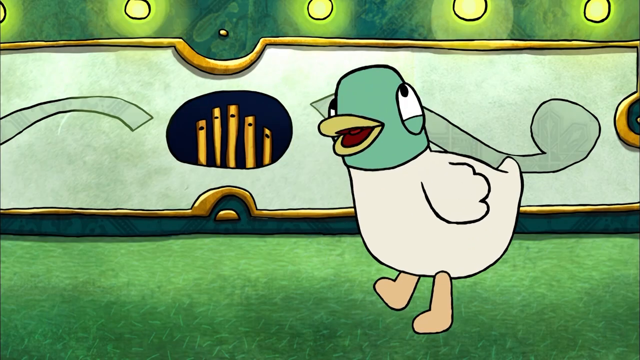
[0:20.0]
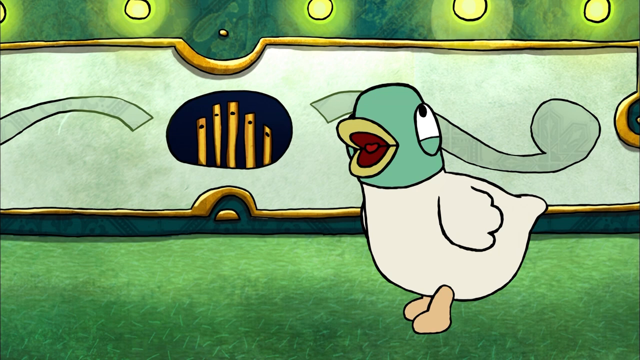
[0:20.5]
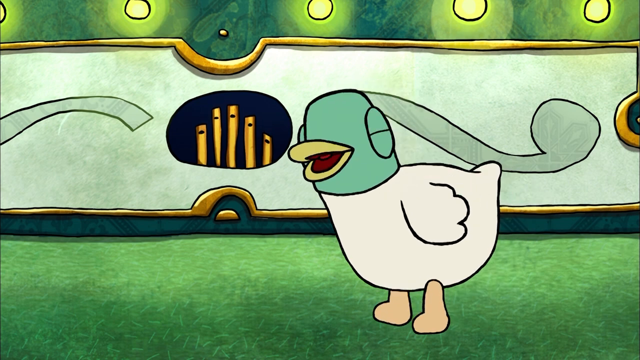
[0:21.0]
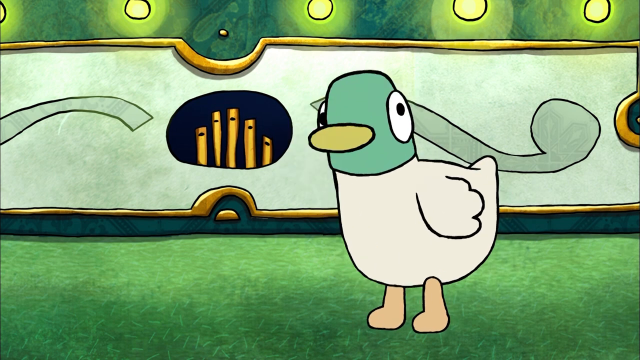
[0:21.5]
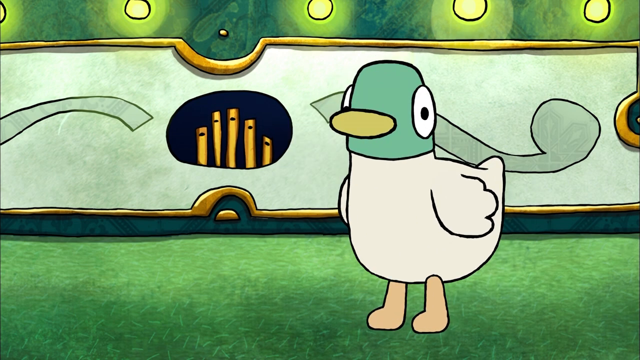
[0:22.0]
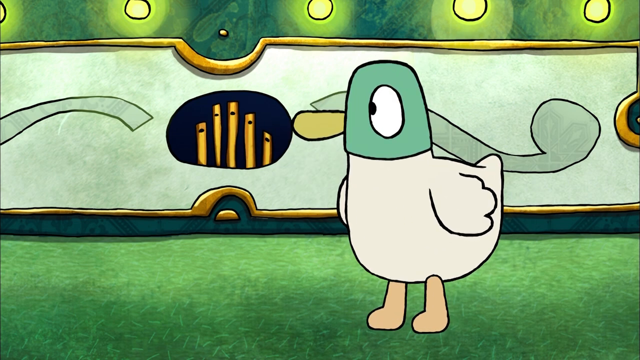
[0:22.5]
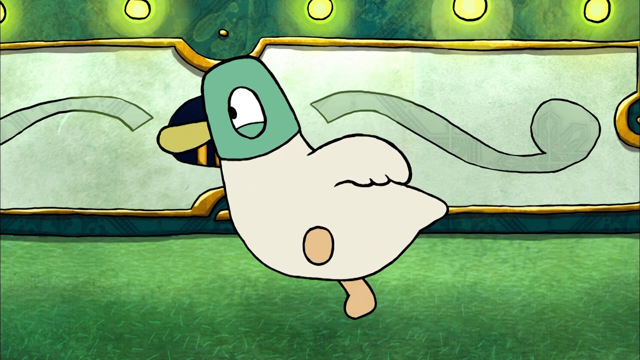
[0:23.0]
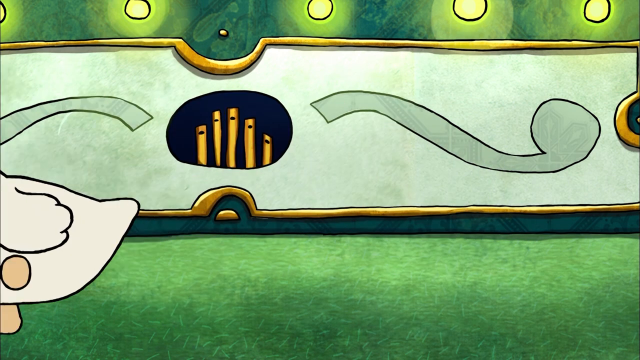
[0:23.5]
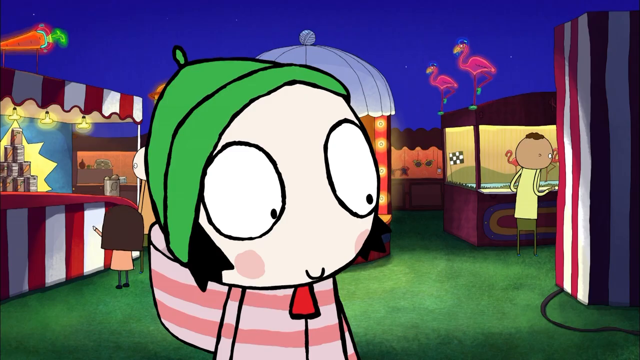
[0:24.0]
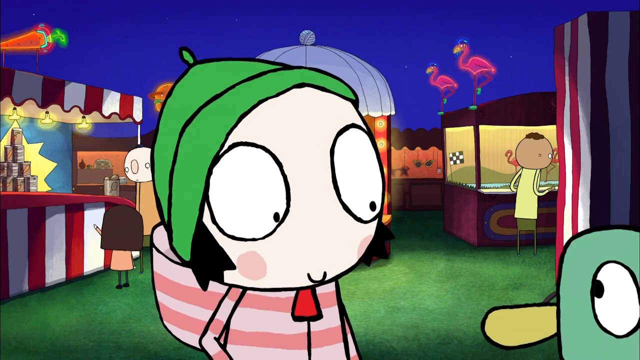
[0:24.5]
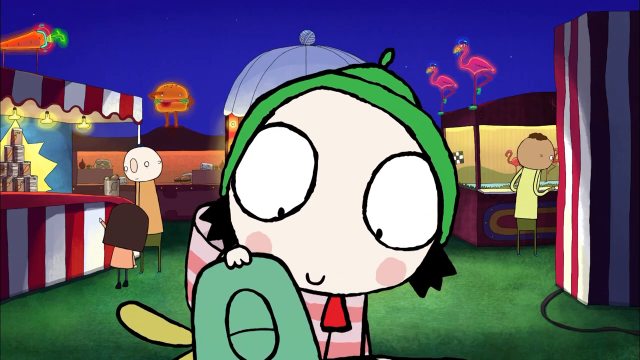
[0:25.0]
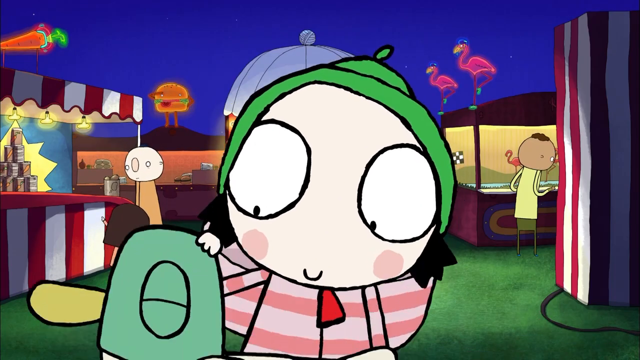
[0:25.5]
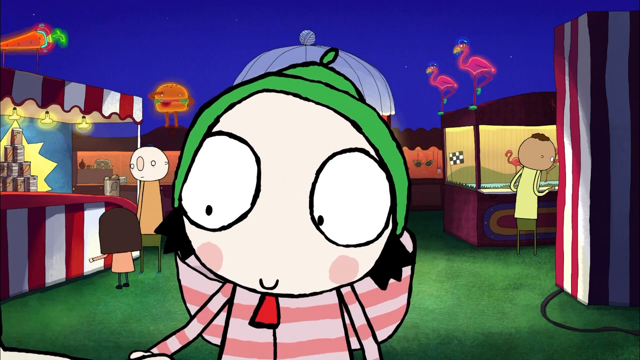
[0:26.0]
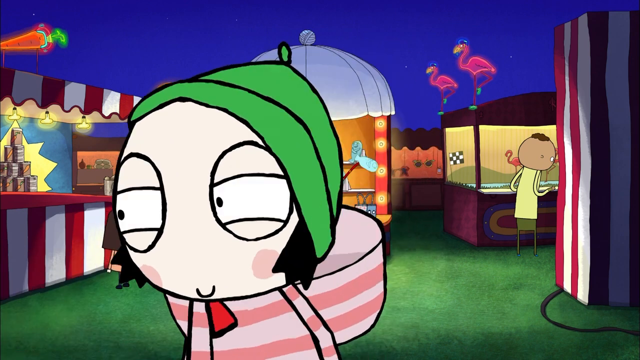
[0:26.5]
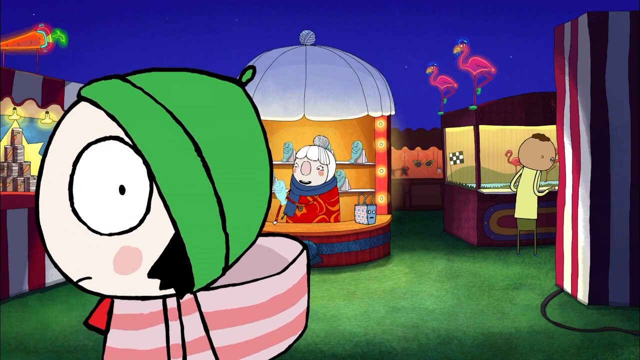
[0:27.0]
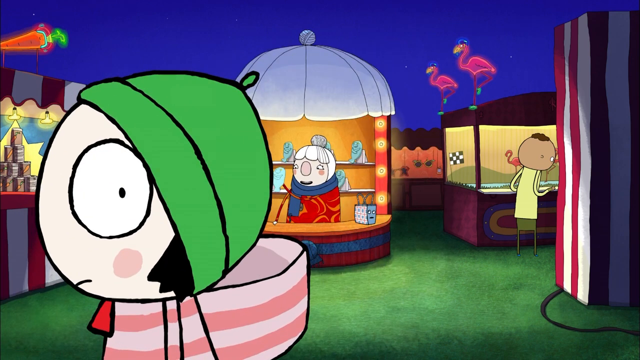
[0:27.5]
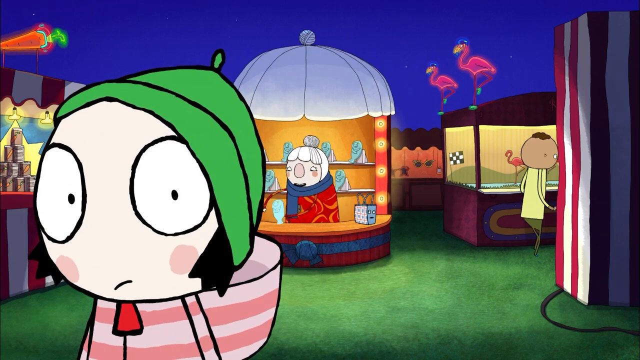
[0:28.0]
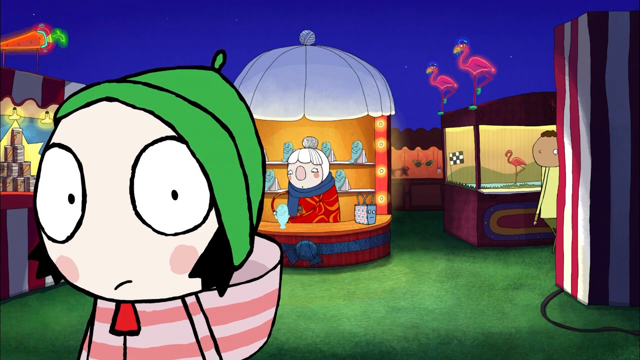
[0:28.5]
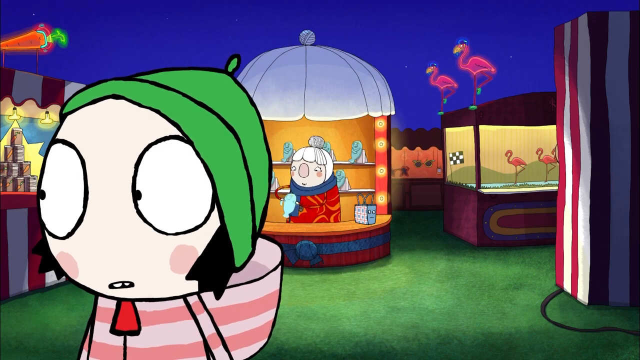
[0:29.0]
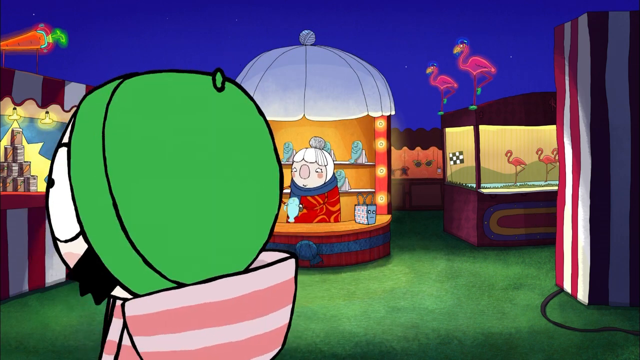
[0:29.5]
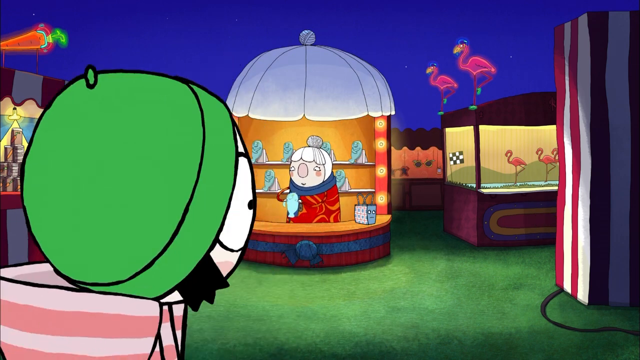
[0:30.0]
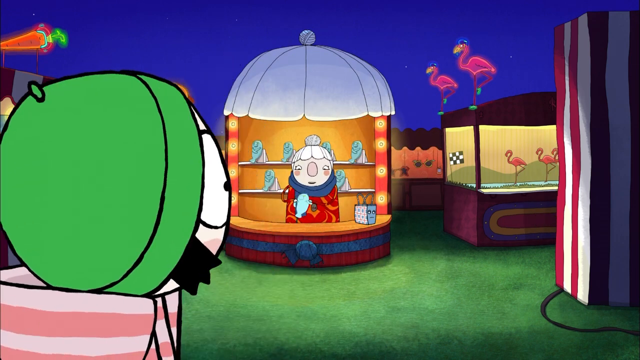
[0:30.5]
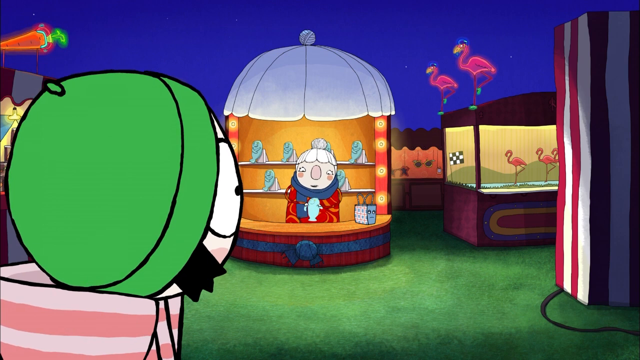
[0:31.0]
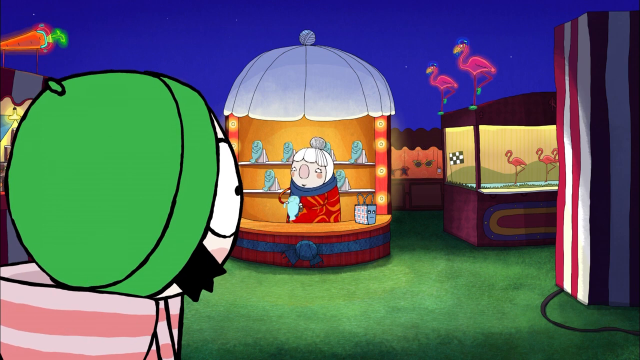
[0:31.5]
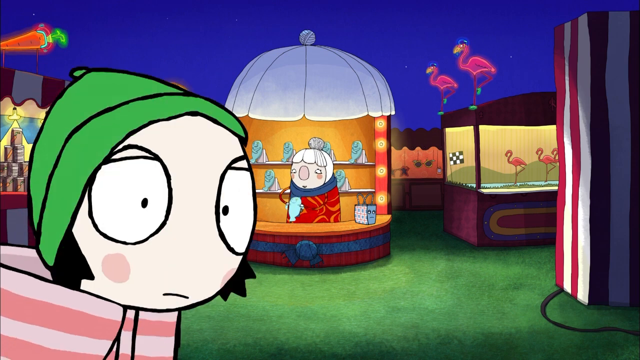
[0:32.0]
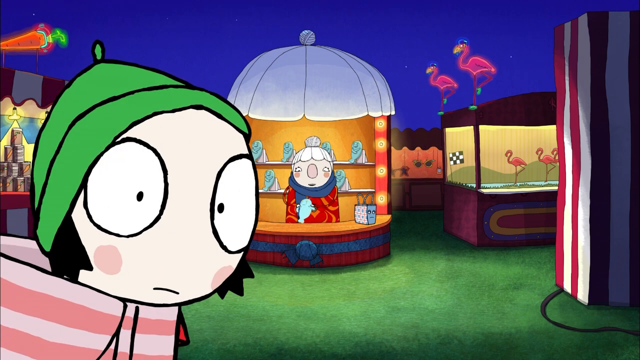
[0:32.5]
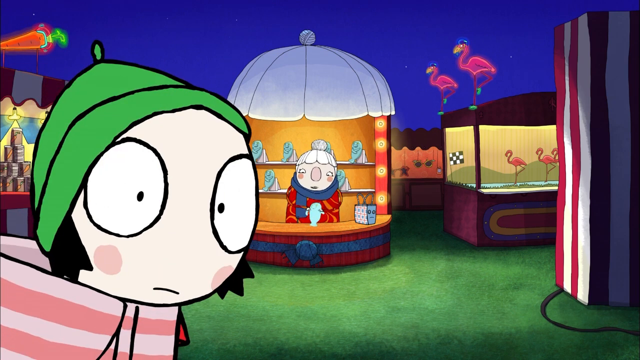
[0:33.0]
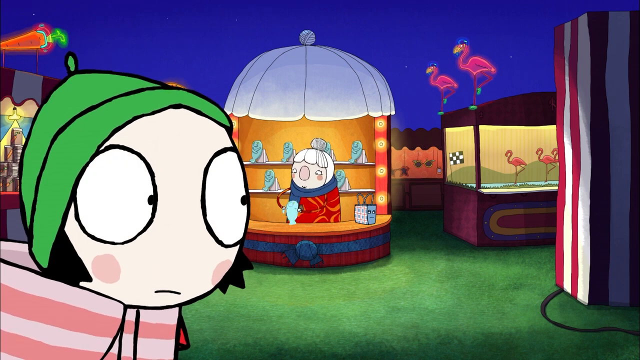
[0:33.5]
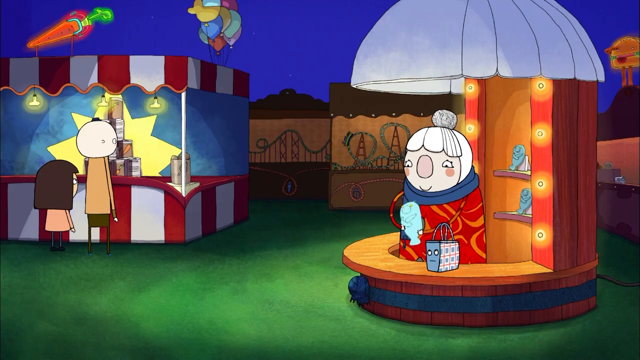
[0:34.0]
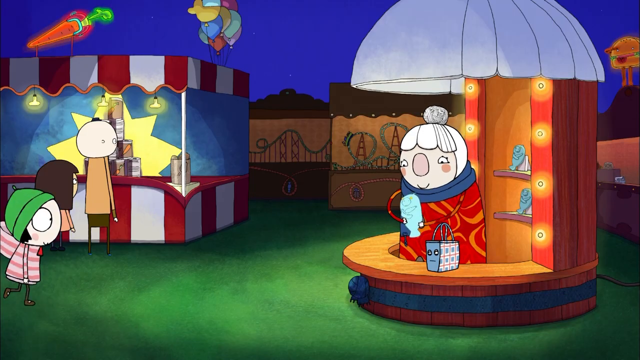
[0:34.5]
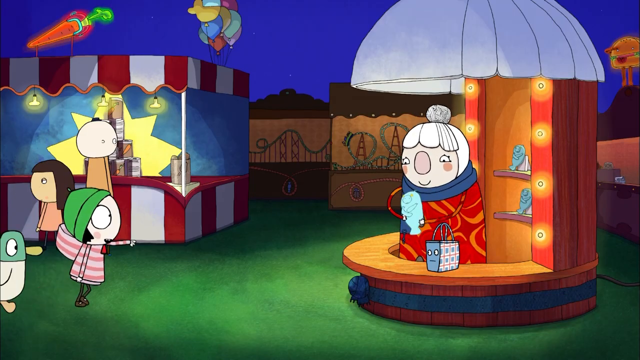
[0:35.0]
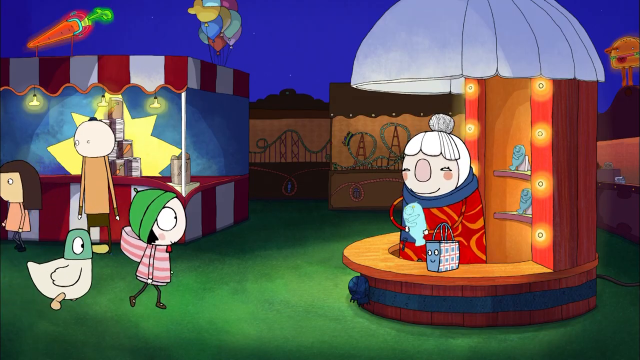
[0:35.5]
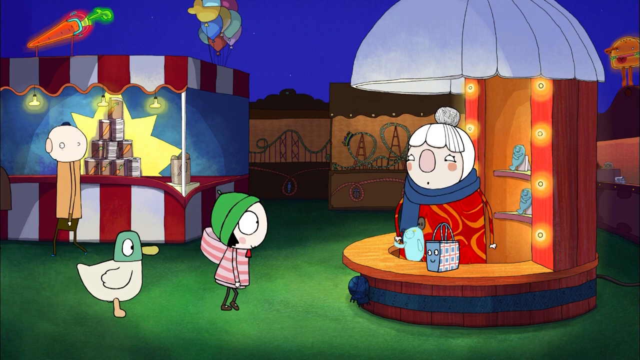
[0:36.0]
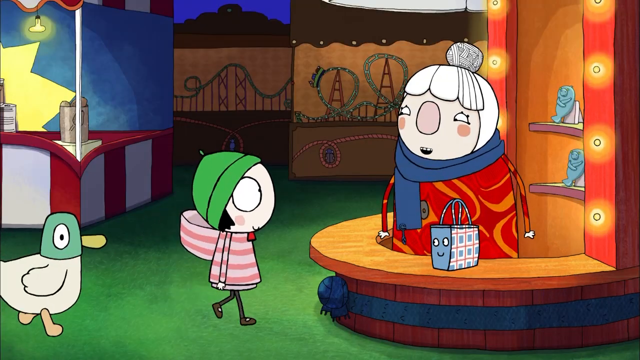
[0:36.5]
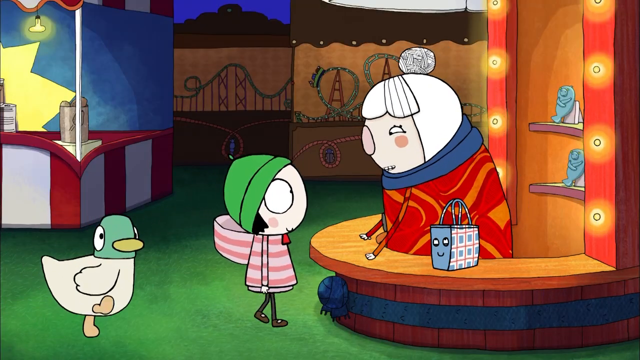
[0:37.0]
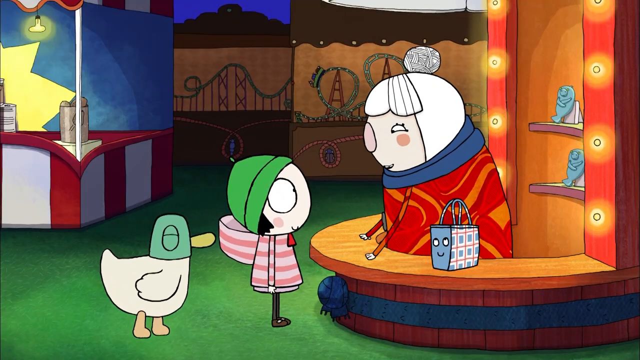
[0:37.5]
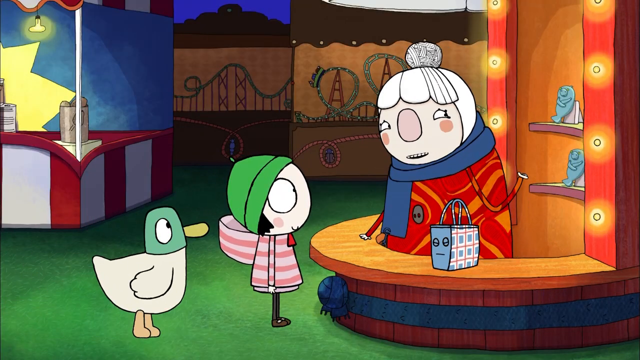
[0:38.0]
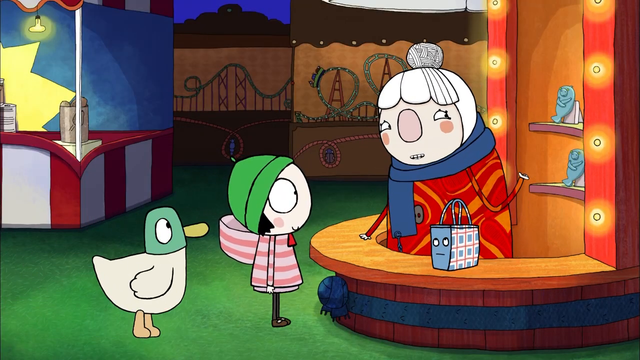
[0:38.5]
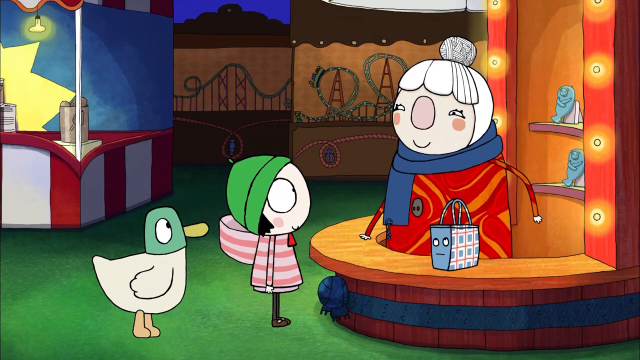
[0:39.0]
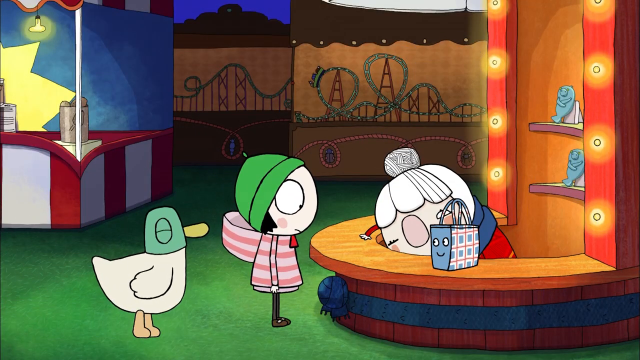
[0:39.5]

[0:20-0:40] The little girl and the dog walk together at a circus. The dog was with the cat but then starts walking towards one of the stalls, and Zara looks around for where the dog has gone. Different stalls are set up at the circus. The sky is blue, but it looks like it is nighttime, as there are a lot of lights shining on the ground and on the people.